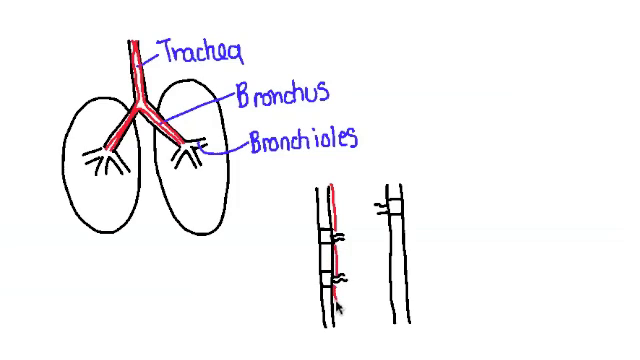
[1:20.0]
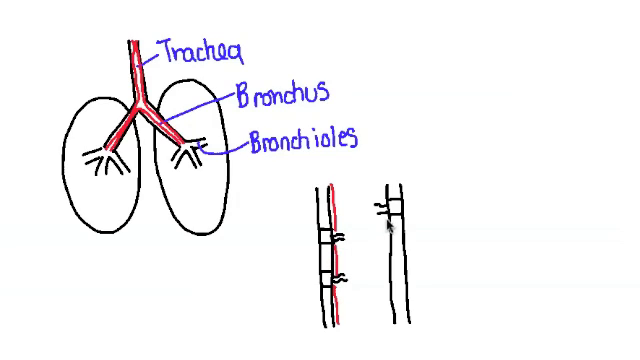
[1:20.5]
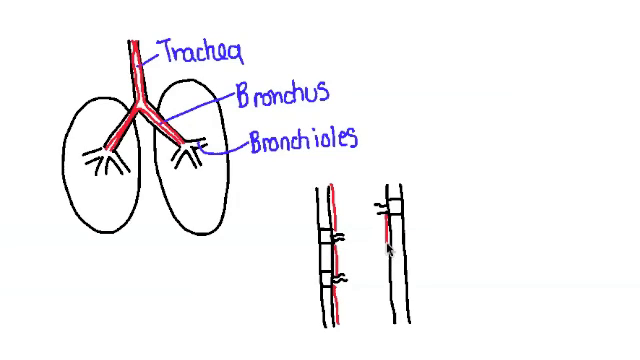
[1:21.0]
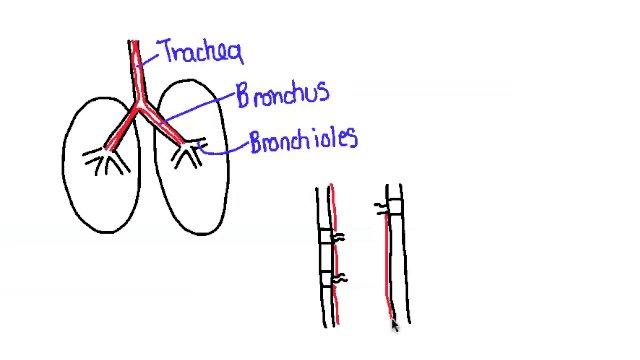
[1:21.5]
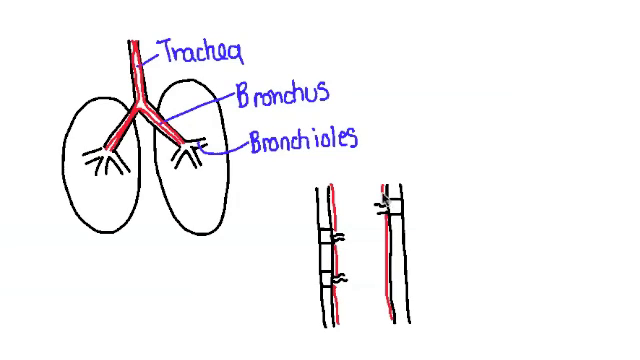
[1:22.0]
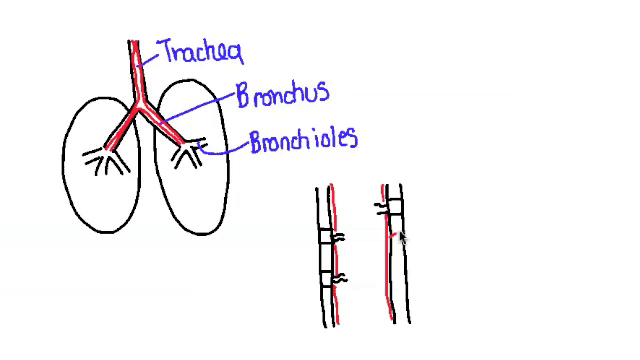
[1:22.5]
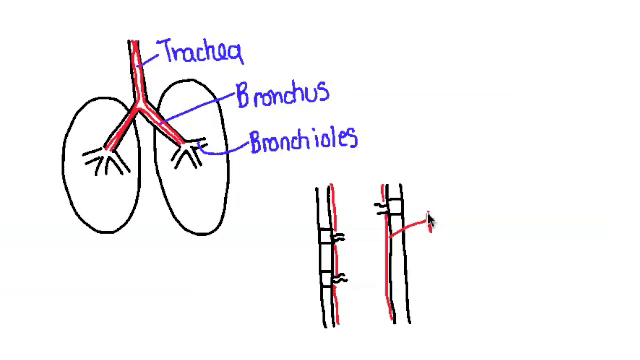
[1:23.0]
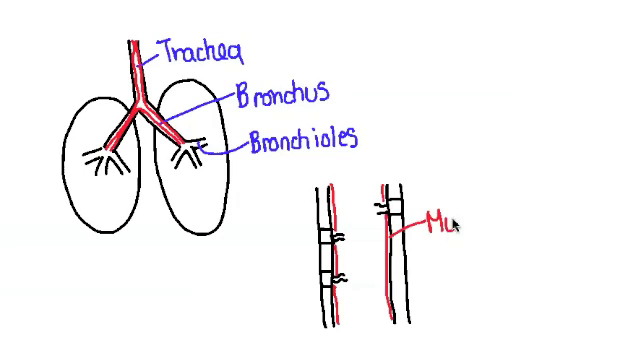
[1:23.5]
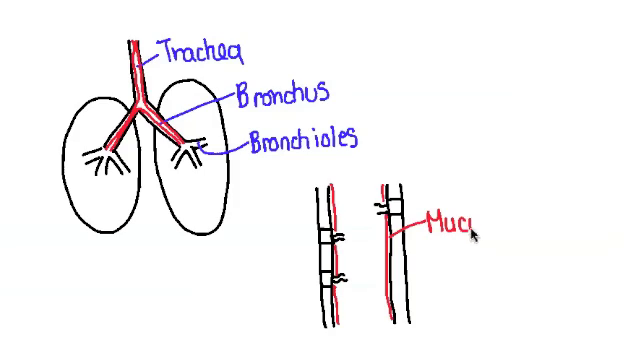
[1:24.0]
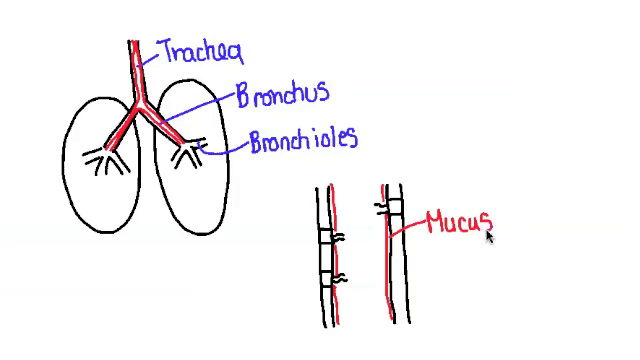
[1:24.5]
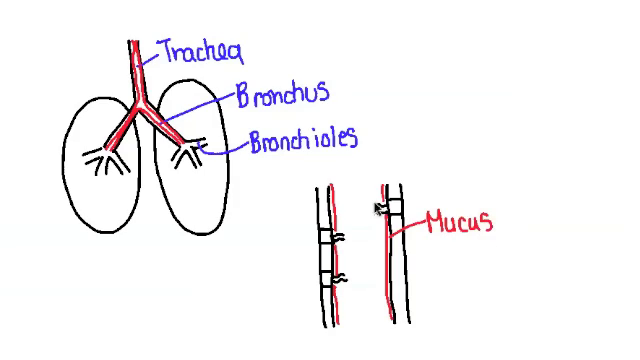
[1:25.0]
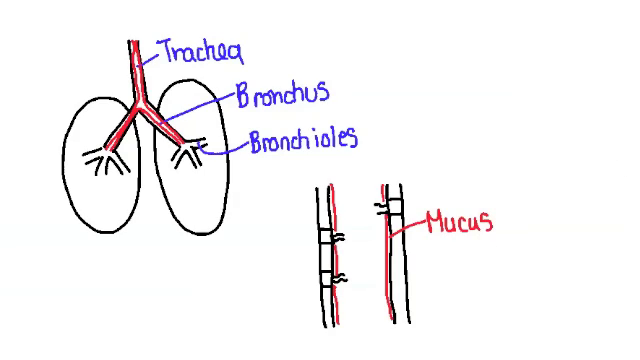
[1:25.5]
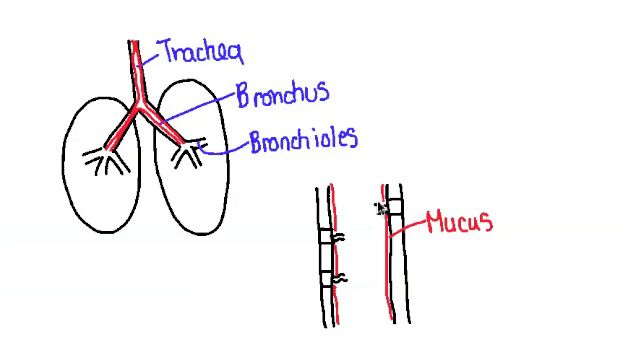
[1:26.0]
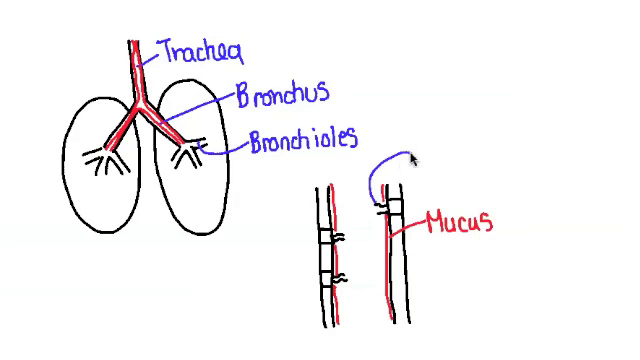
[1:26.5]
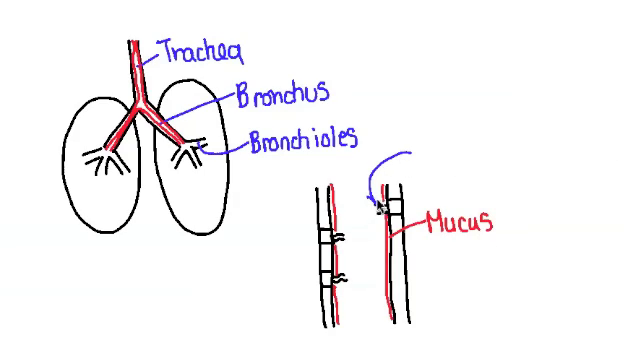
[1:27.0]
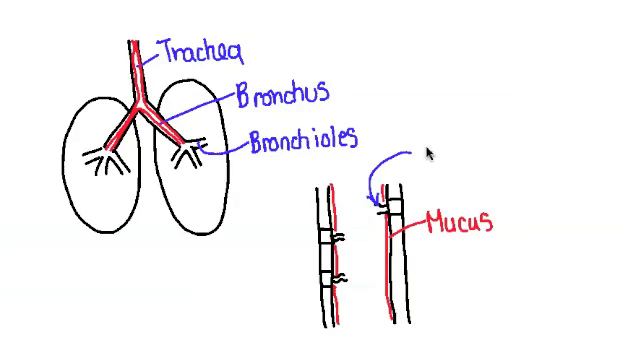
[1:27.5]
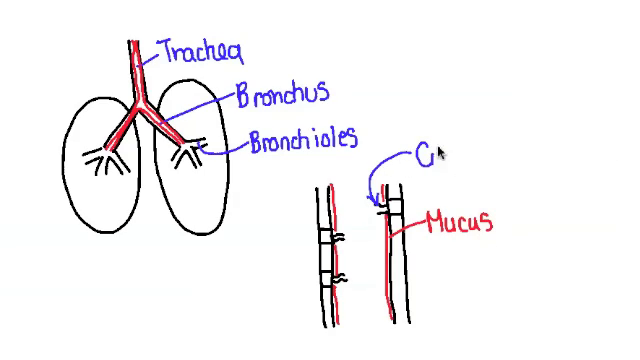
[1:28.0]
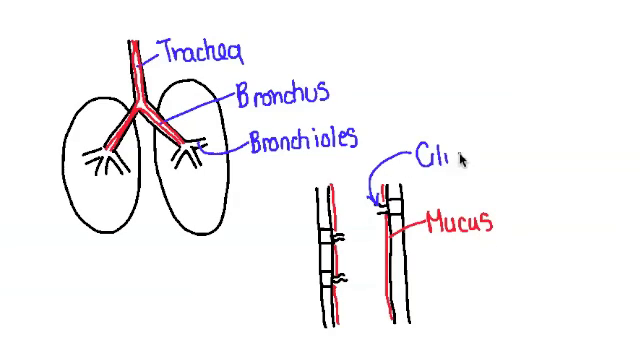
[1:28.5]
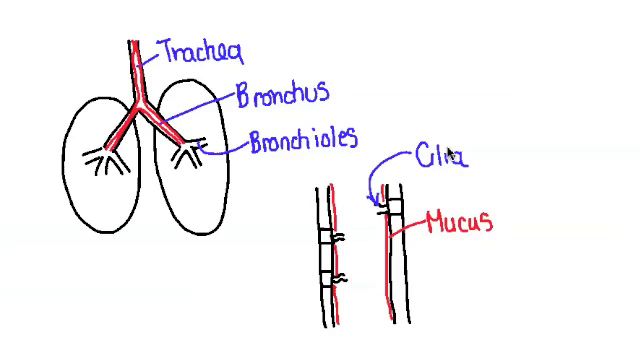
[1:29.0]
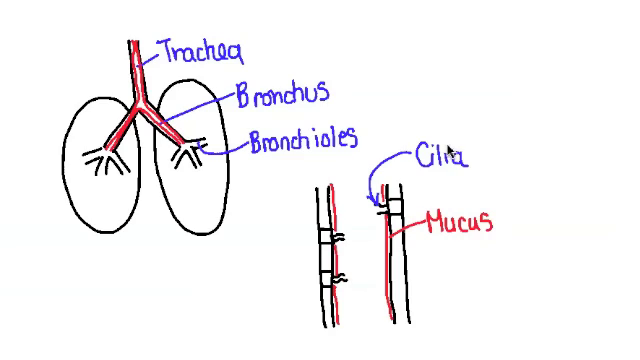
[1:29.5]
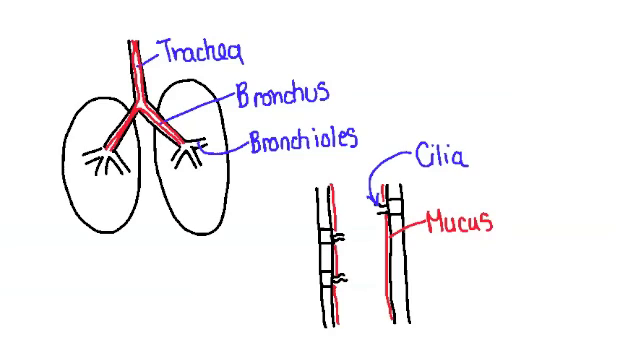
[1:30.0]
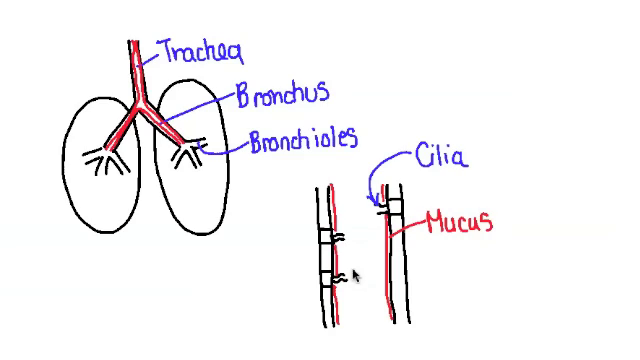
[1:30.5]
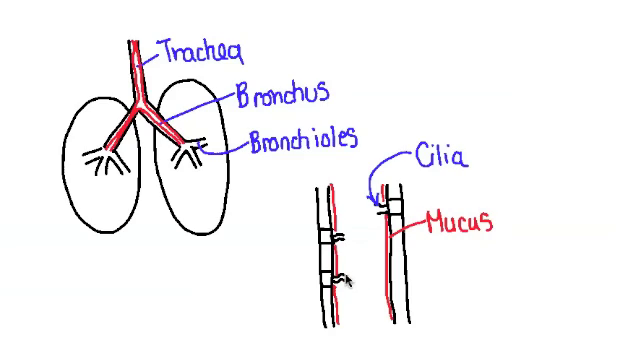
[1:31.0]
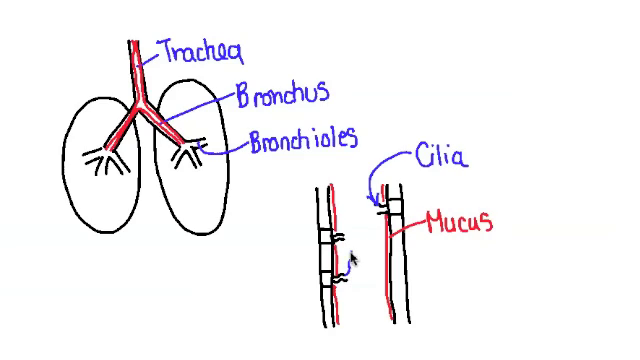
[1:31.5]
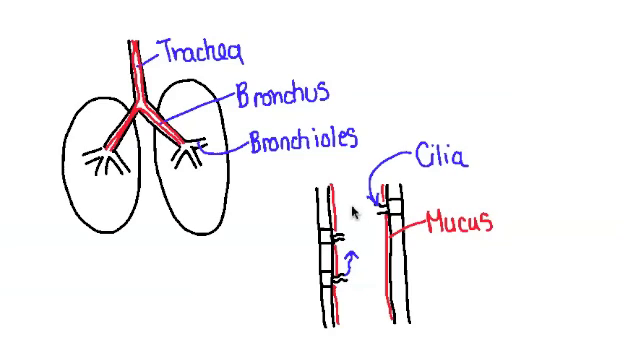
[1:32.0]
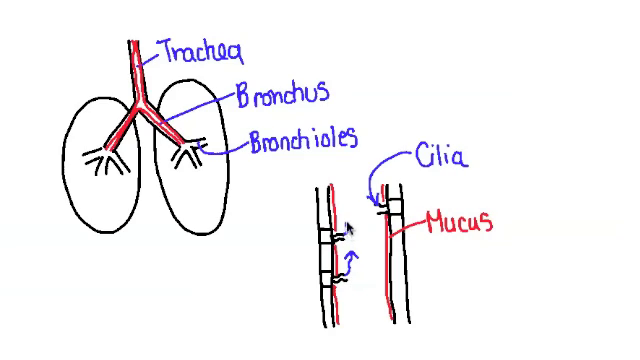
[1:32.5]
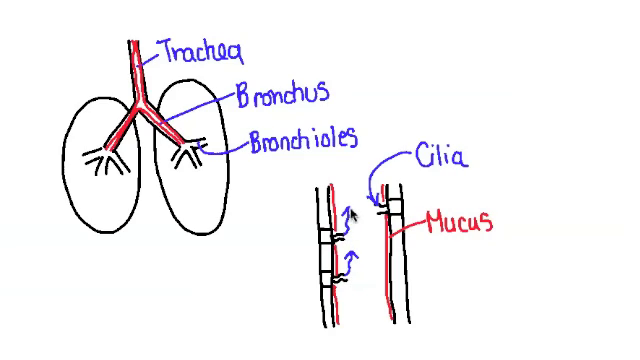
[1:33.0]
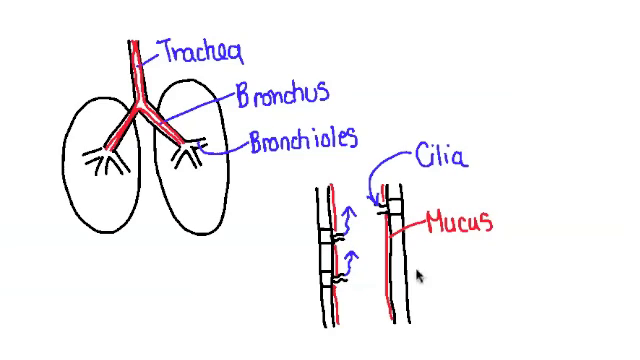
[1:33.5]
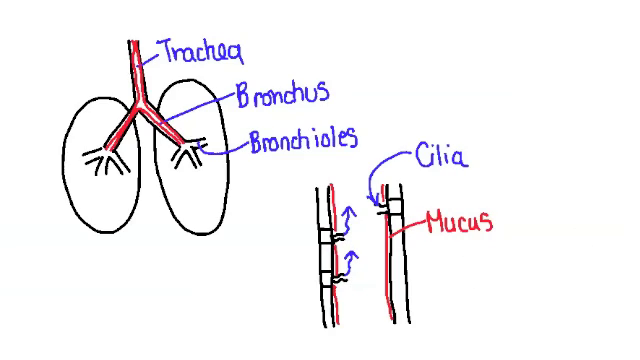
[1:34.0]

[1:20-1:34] Red lines continue to be drawn vertically, and then a red line connects the right vertical red line to the empty space on the right, where it leads to a label reading "mucus" in red text. The red in this diagram appears to represent mucus. An arrow with a curved purple line is then drawn to the squiggly lines extending outside the two lines, with the label "cilia."